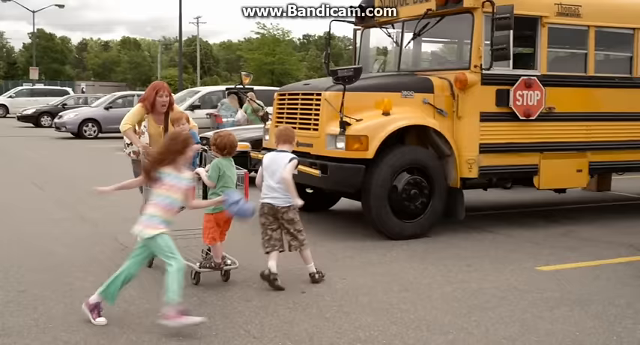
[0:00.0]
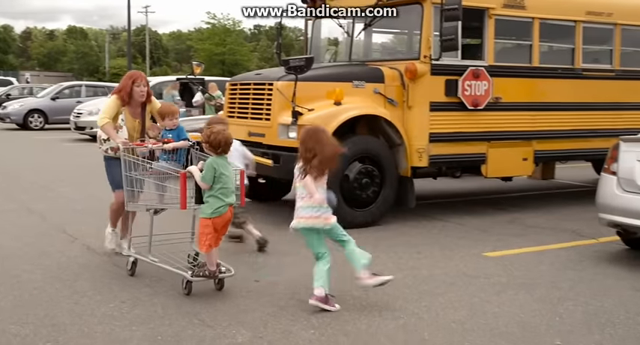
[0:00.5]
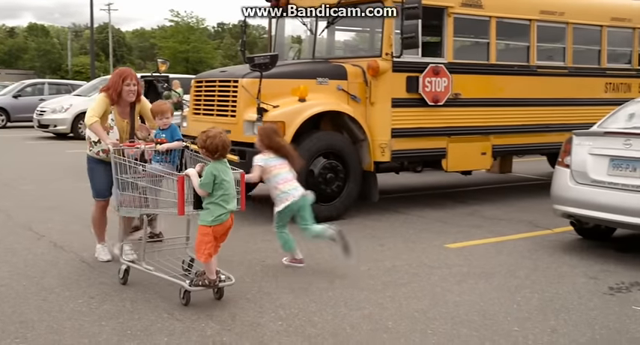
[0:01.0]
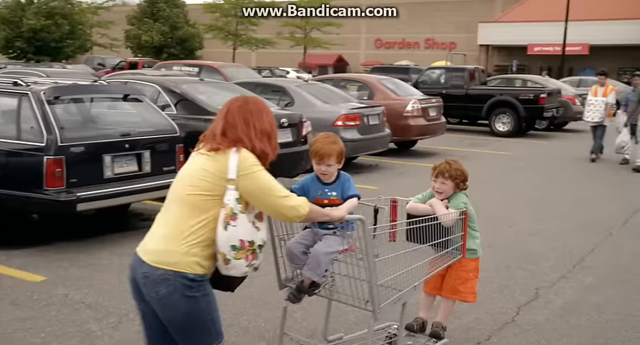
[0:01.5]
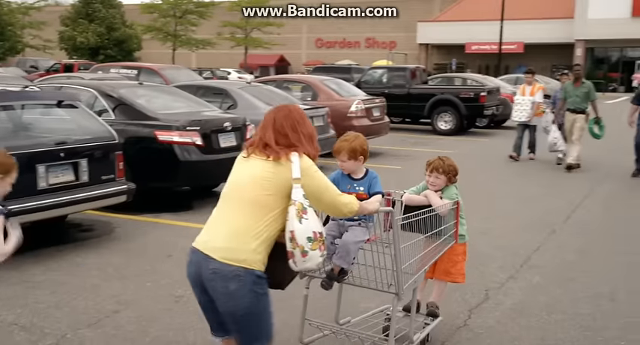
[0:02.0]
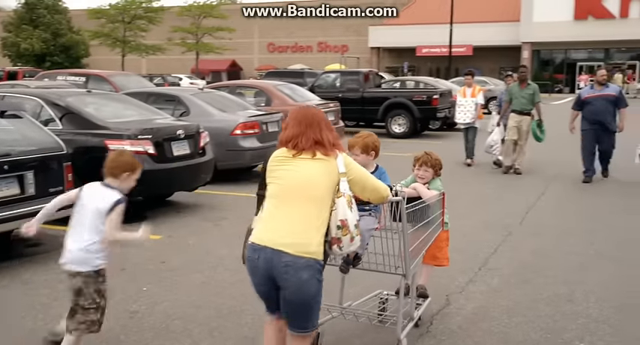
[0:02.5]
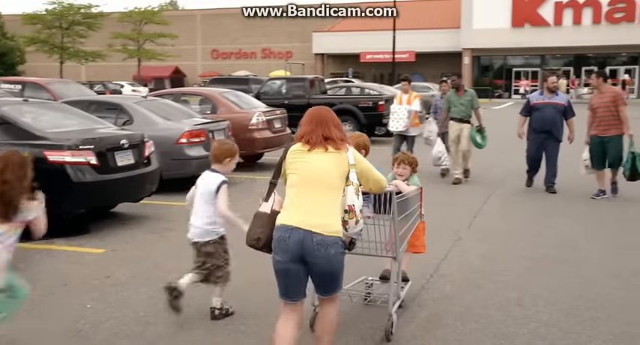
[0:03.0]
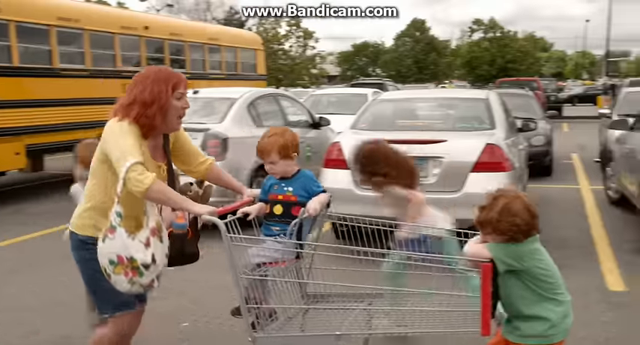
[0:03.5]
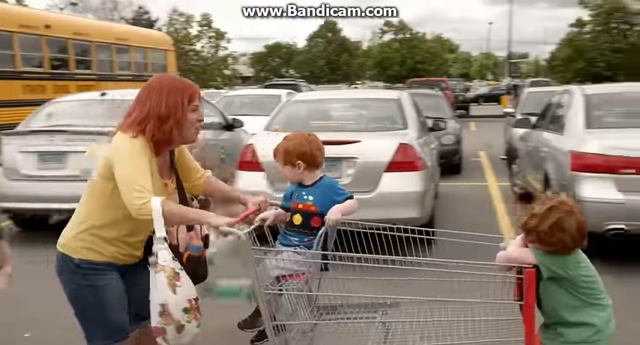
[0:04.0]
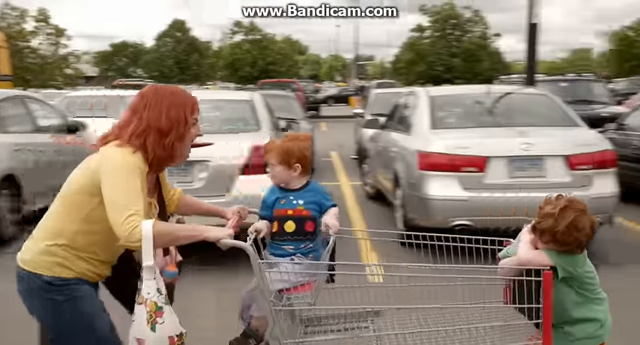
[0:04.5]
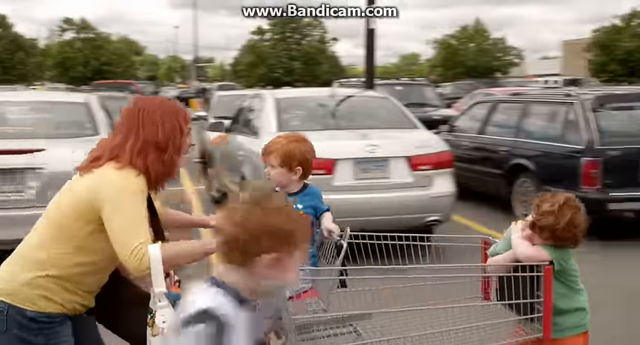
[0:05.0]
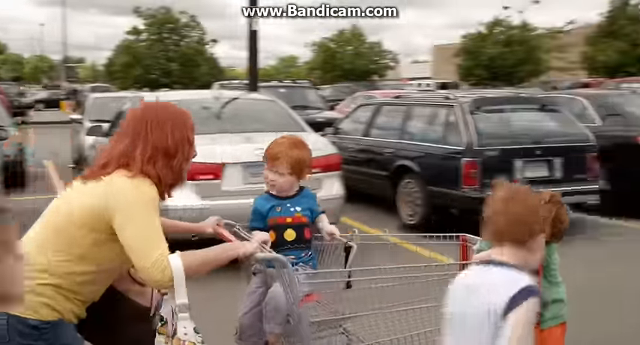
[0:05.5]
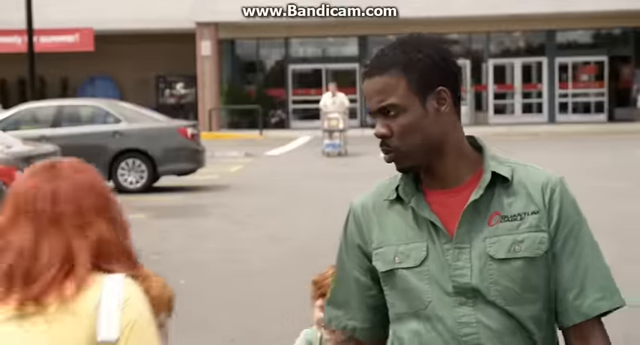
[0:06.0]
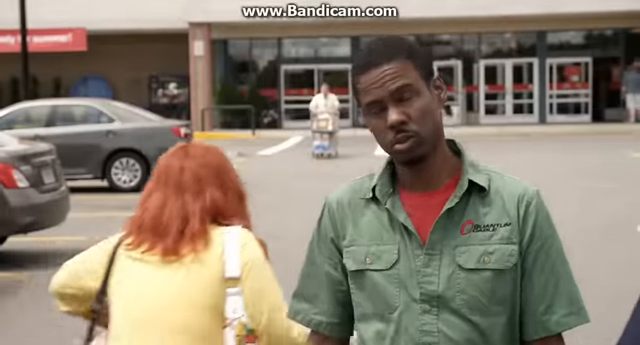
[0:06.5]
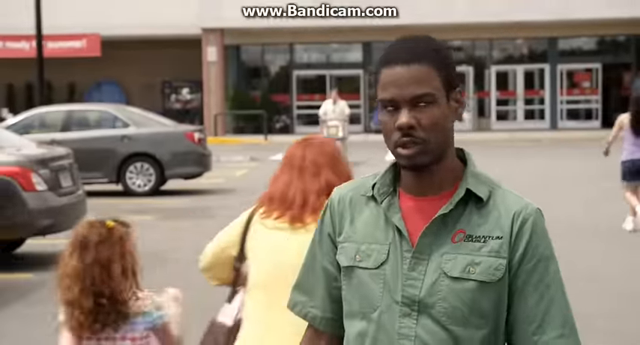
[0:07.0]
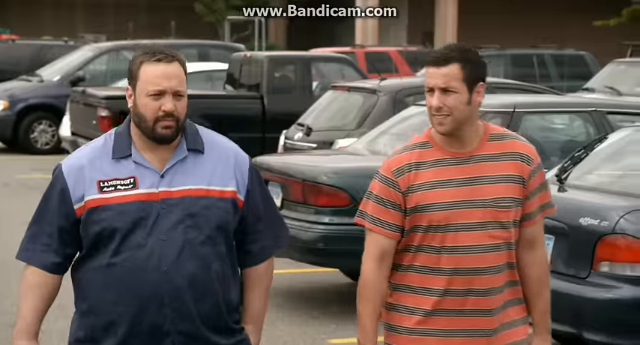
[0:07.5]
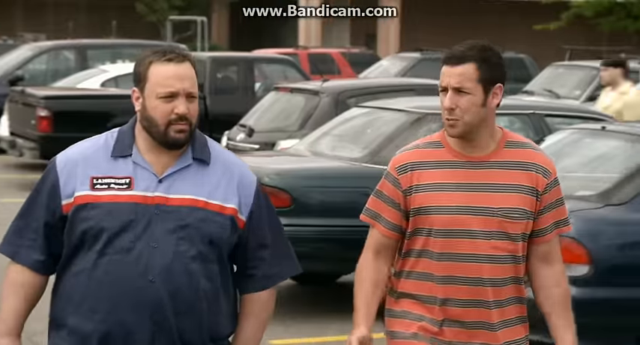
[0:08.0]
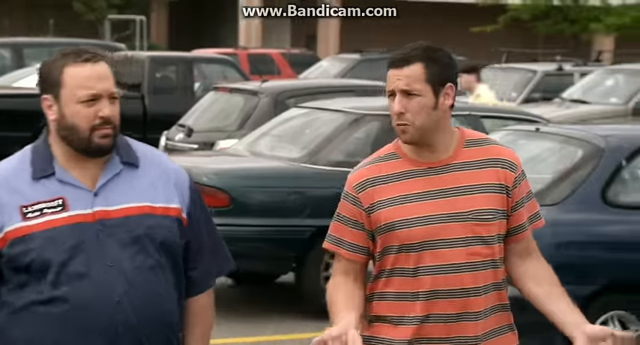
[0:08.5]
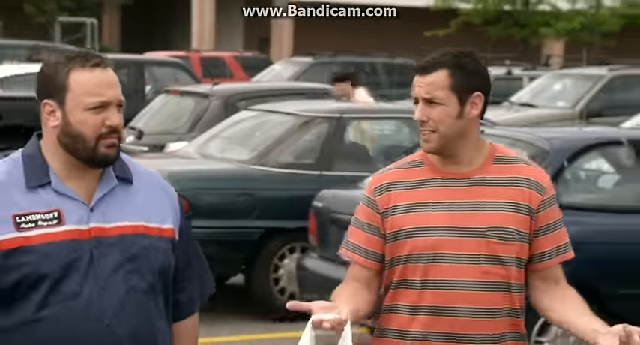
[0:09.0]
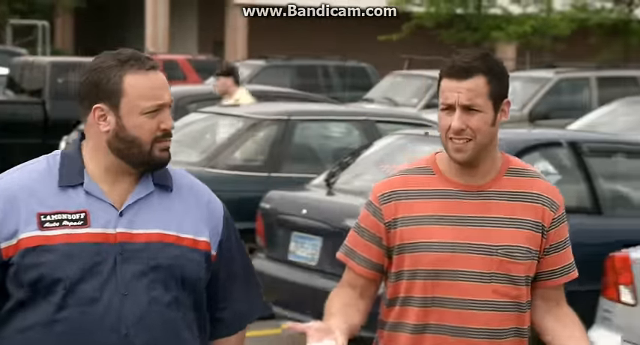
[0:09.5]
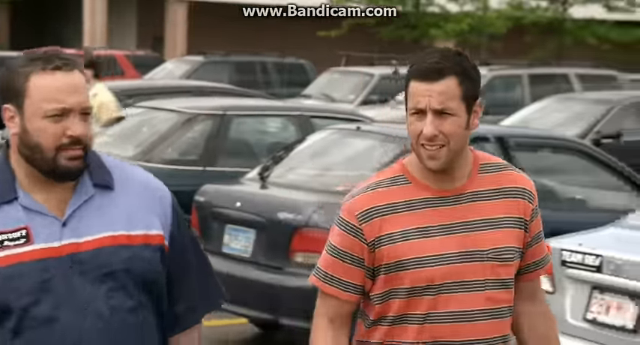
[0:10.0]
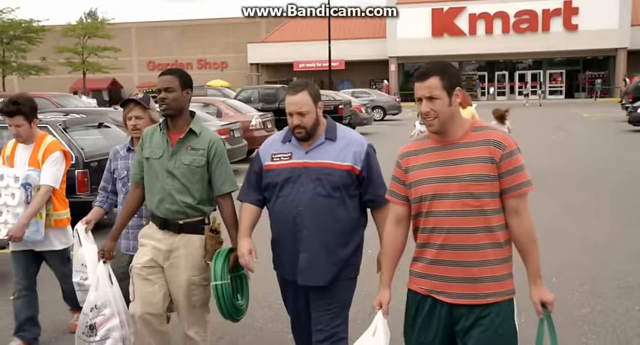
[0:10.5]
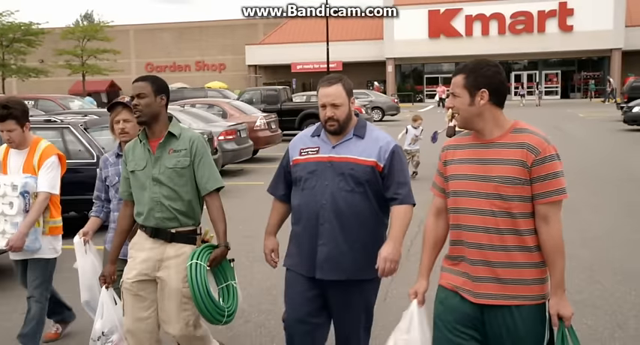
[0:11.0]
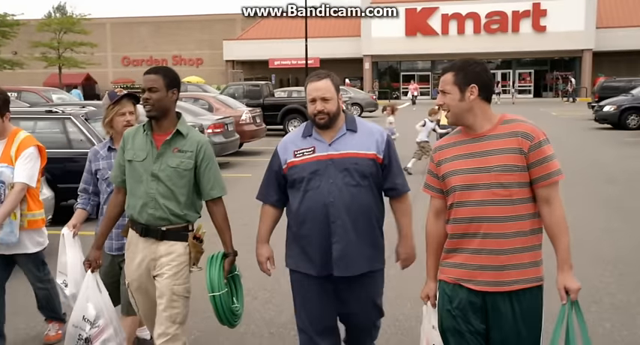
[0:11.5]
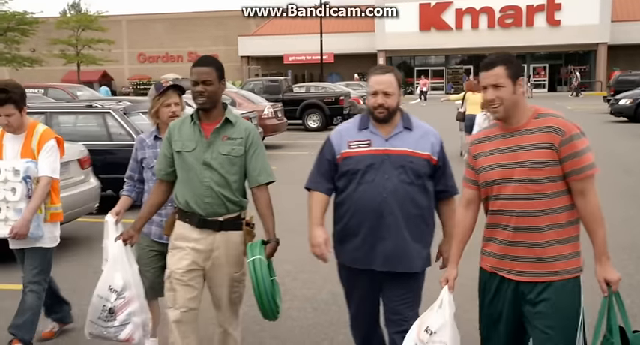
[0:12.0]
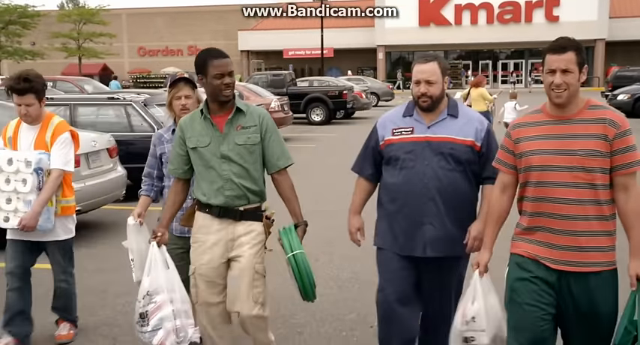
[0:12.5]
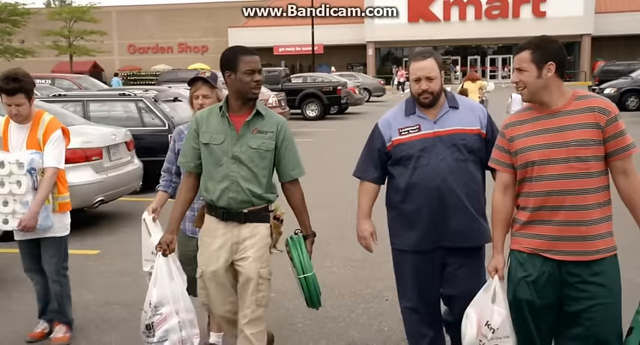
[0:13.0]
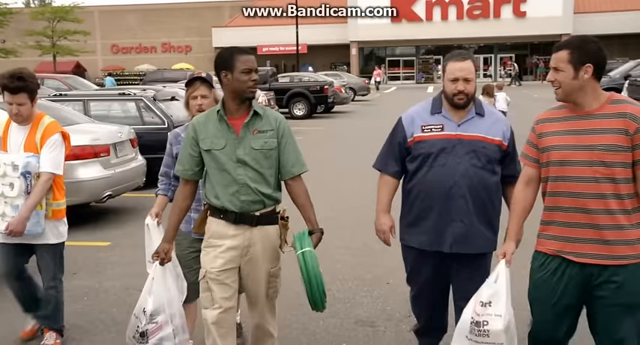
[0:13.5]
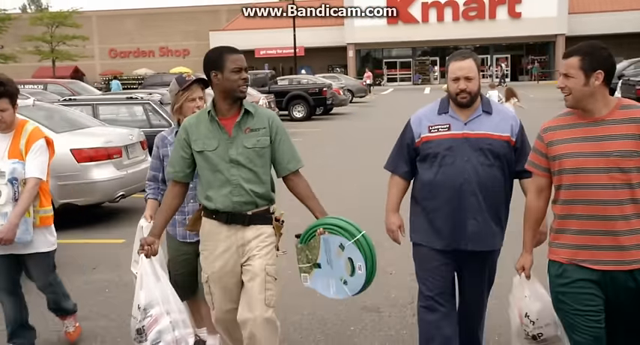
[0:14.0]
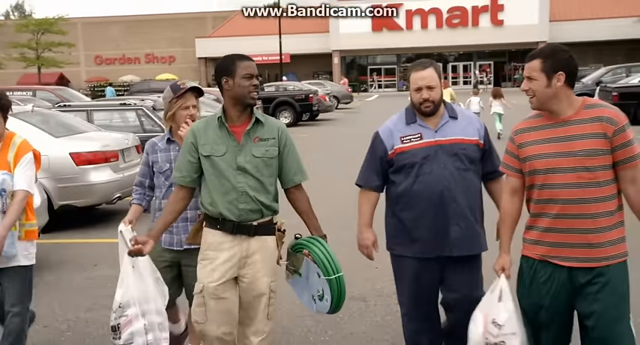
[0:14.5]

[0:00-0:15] A red-haired mother who looks rather harassed pushes a shopping cart along the parking lot of a Kmart shopping centre, with about three or four kids running around the cart. She is screaming at them; she is probably trying to get them to behave, but they are not listening. The camera moves to a group of men walking in the opposite direction. One is Adam Sandler, wearing a checked shirt and what looks like shorts. Next to him is a rather large, overweight actor, apparently from The King of Queens. A black man on his right is Chris Rock, and a shorter blonde-haired man in a cap and short pants is apparently David Spade. There are one or two other men who are not identified. The men stop walking and stand talking in the parking lot. Adam Sandler speaks to the actor from The King of Queens on his right. He is wearing a mechanic's overall, and he suddenly stops and does some kind of wiggle, as if something is wrong with his leg.